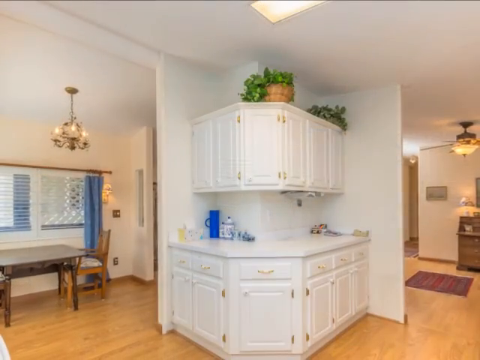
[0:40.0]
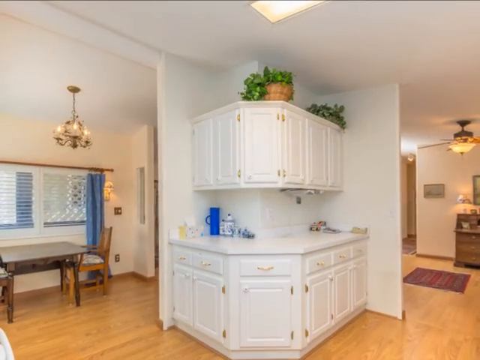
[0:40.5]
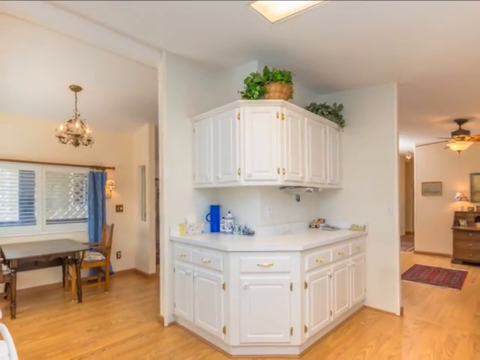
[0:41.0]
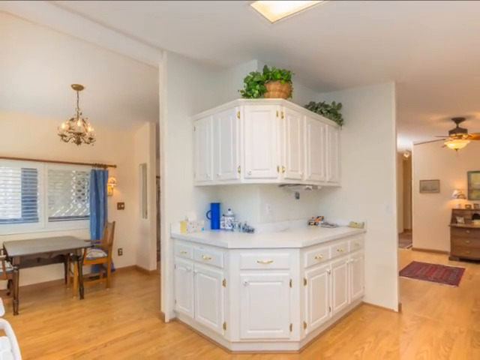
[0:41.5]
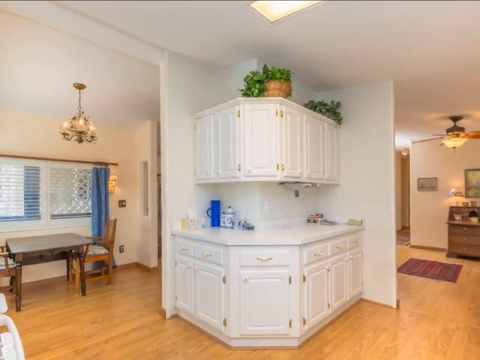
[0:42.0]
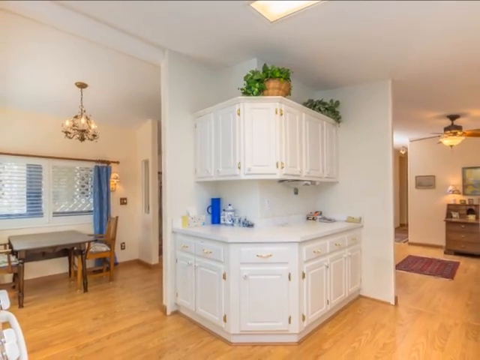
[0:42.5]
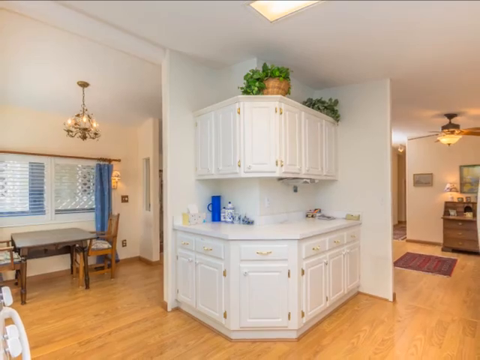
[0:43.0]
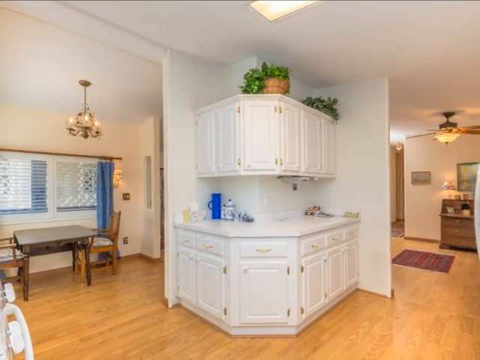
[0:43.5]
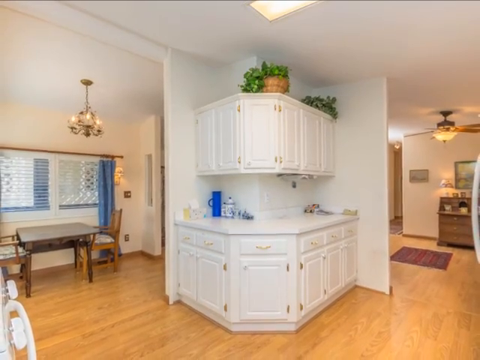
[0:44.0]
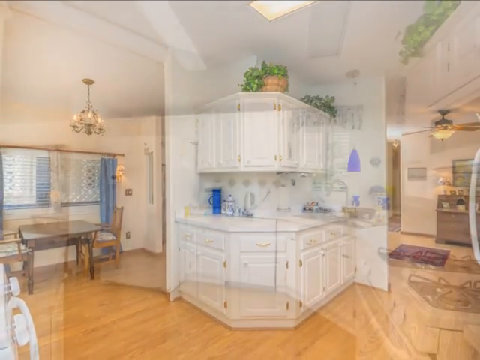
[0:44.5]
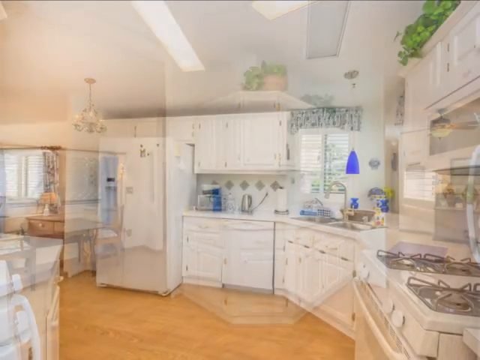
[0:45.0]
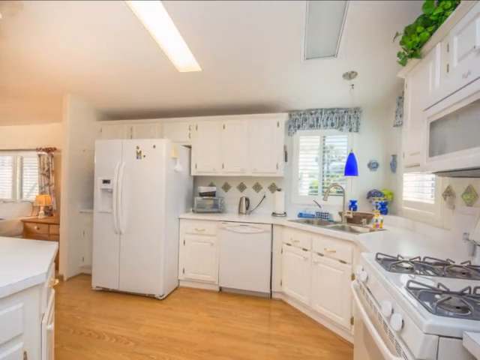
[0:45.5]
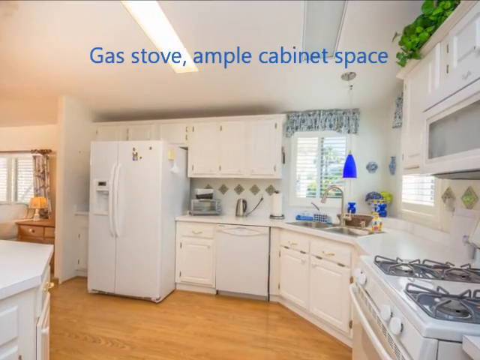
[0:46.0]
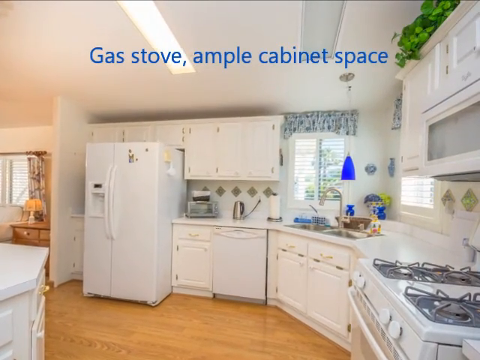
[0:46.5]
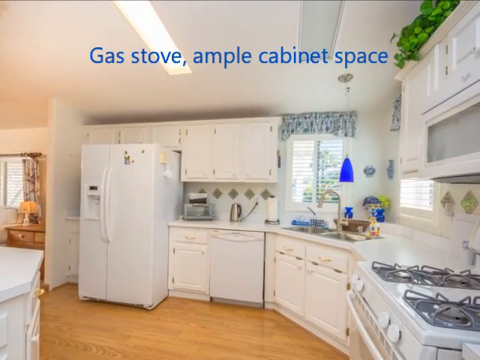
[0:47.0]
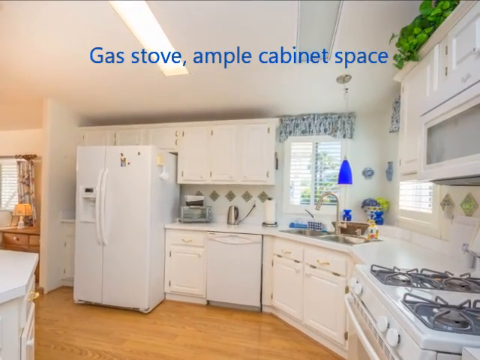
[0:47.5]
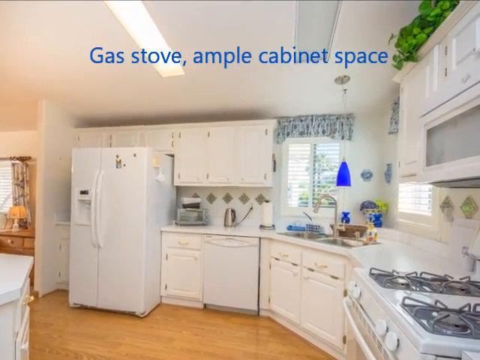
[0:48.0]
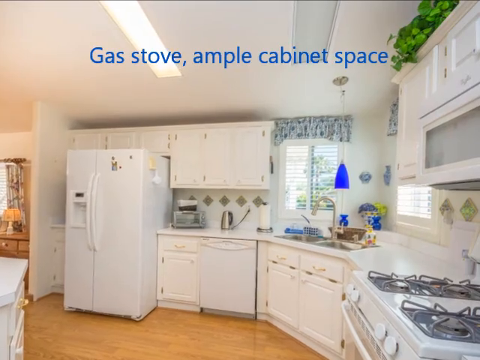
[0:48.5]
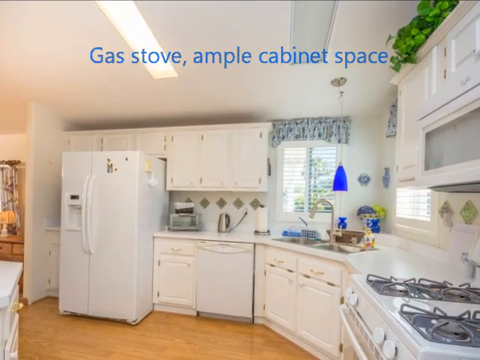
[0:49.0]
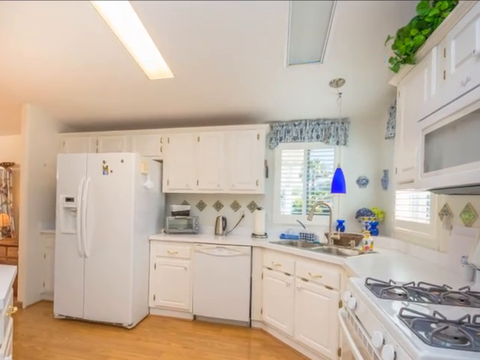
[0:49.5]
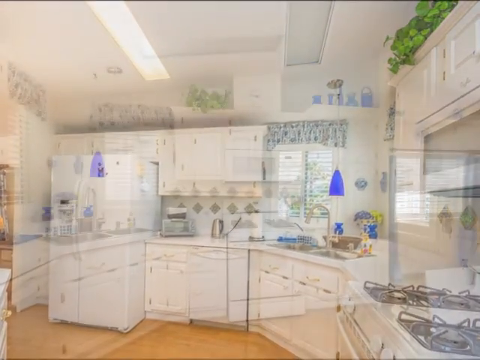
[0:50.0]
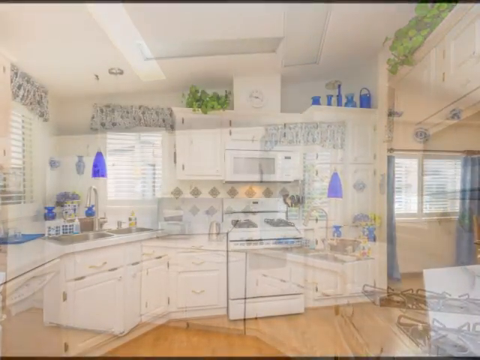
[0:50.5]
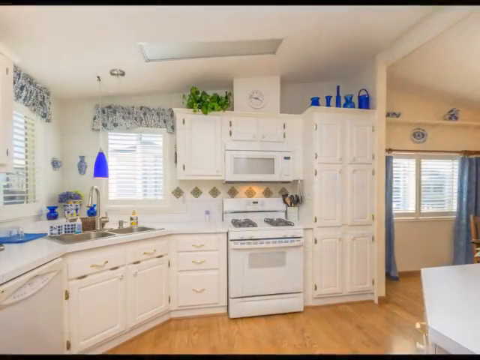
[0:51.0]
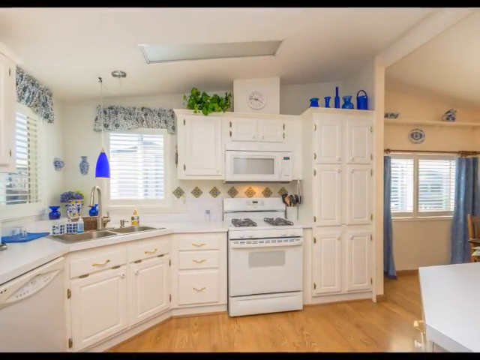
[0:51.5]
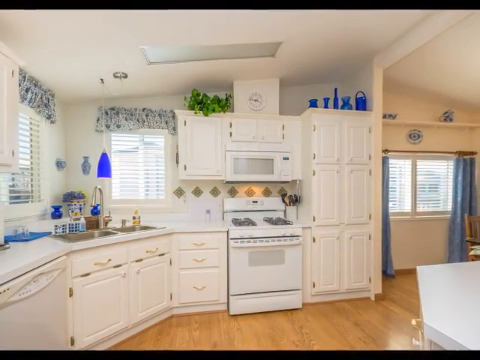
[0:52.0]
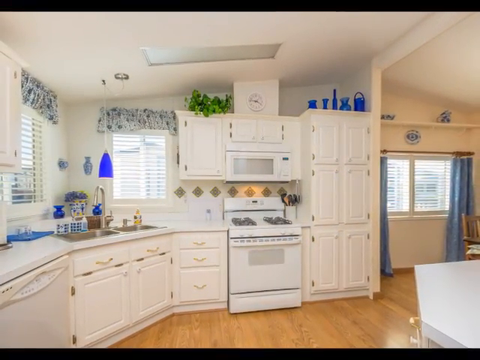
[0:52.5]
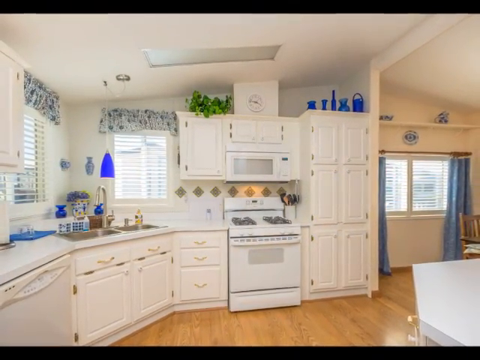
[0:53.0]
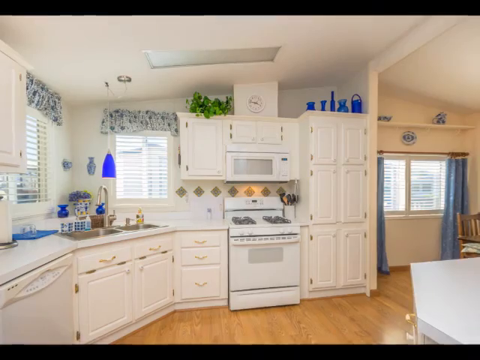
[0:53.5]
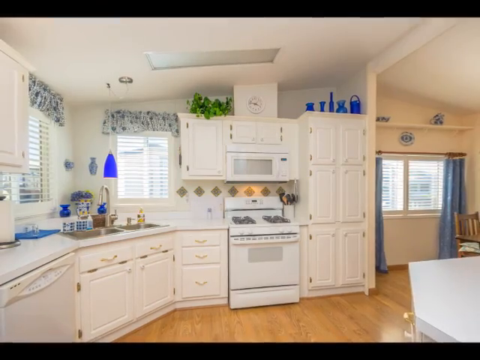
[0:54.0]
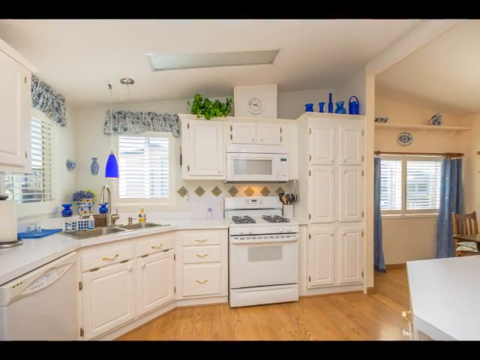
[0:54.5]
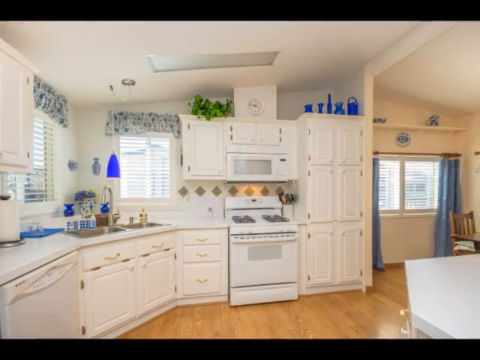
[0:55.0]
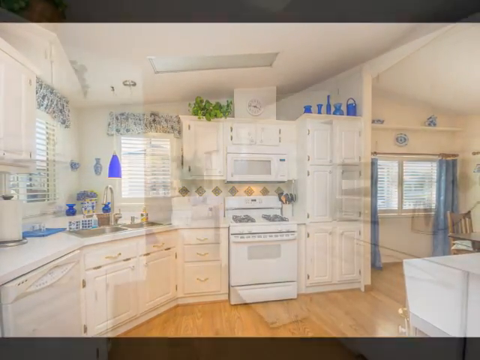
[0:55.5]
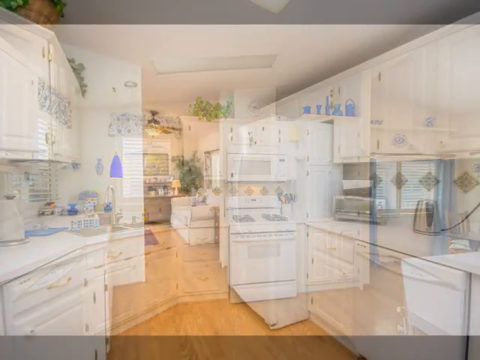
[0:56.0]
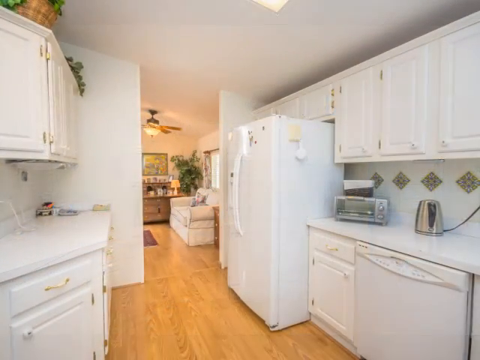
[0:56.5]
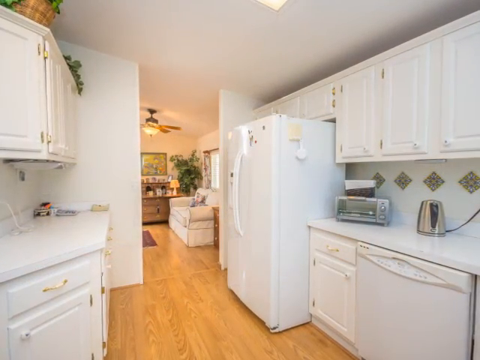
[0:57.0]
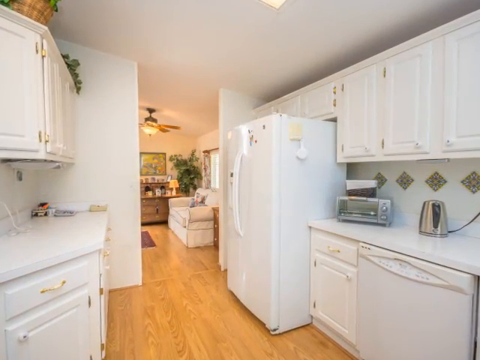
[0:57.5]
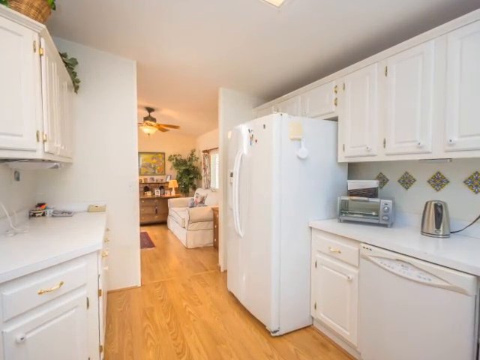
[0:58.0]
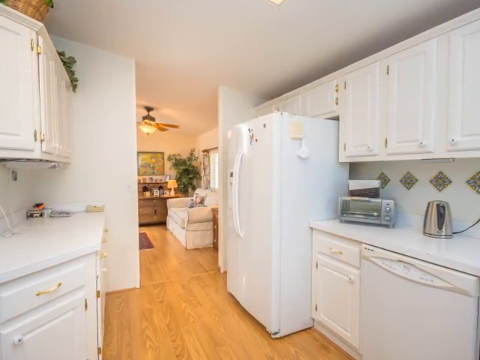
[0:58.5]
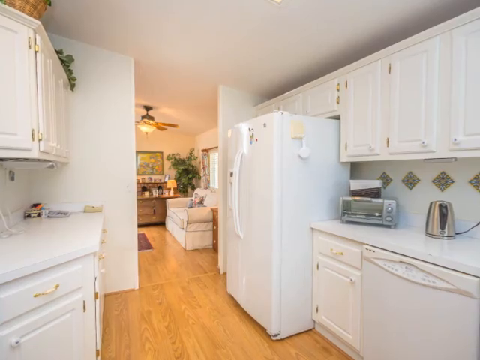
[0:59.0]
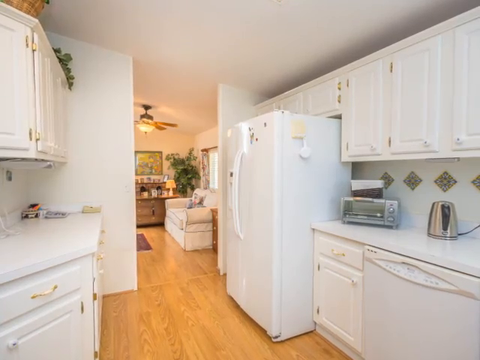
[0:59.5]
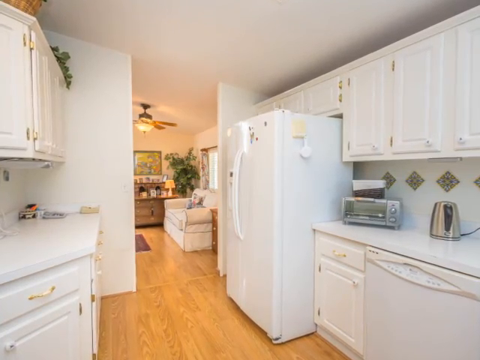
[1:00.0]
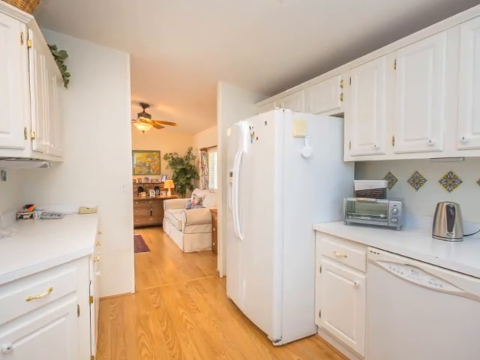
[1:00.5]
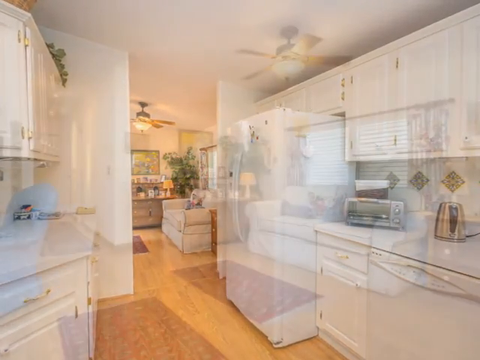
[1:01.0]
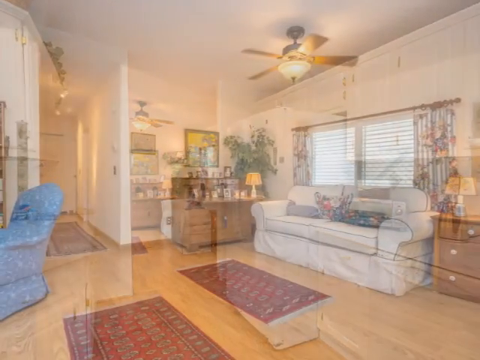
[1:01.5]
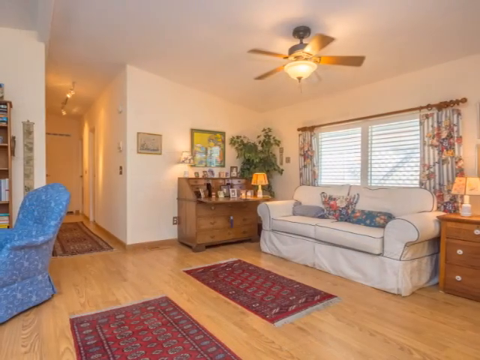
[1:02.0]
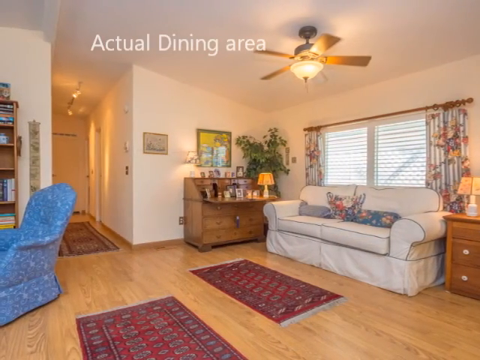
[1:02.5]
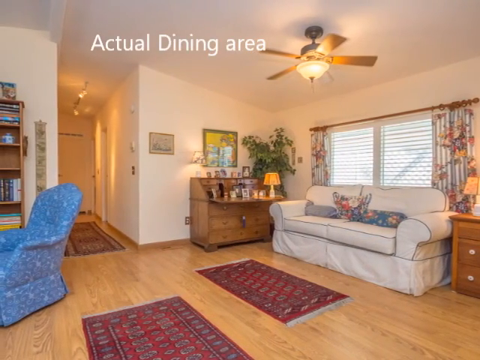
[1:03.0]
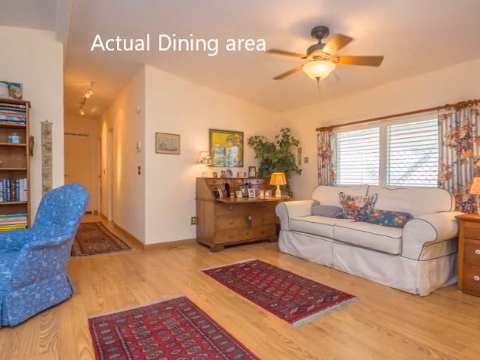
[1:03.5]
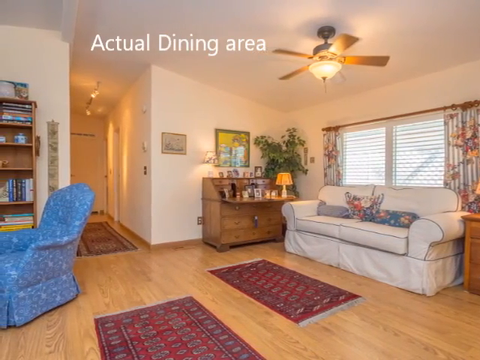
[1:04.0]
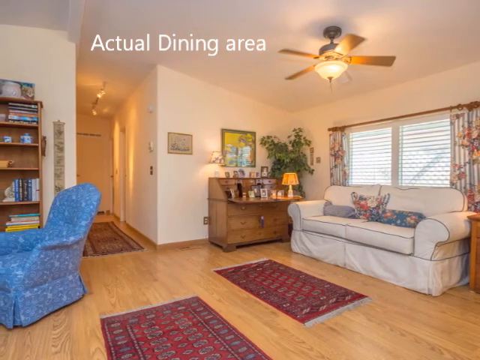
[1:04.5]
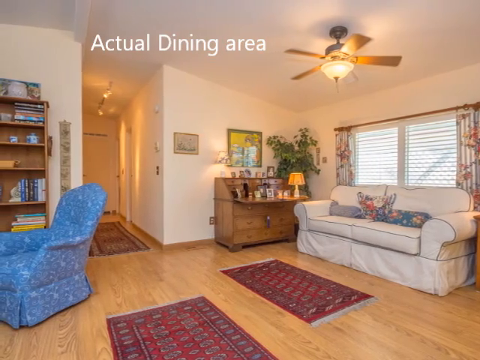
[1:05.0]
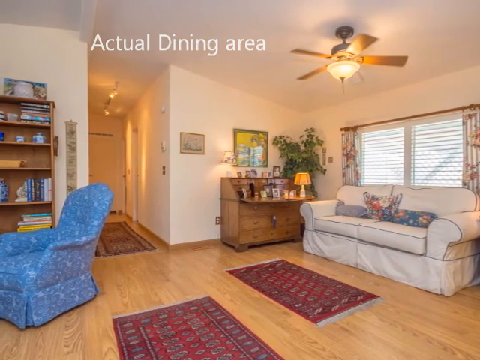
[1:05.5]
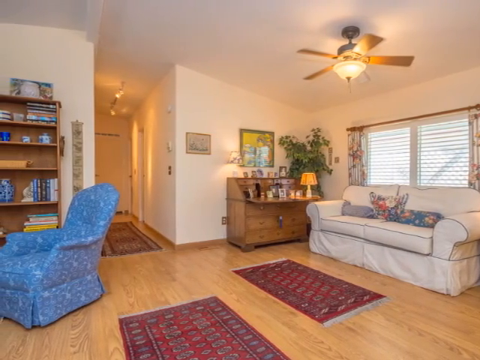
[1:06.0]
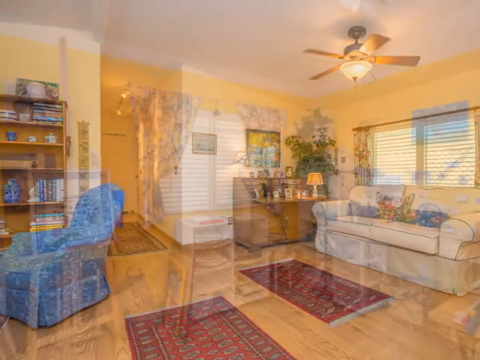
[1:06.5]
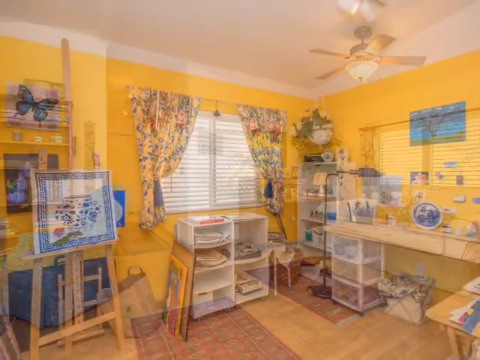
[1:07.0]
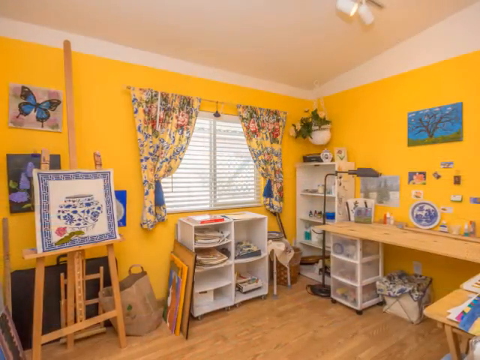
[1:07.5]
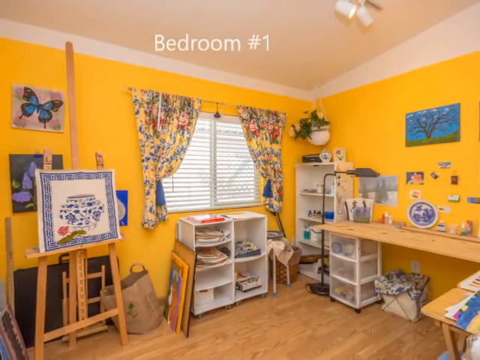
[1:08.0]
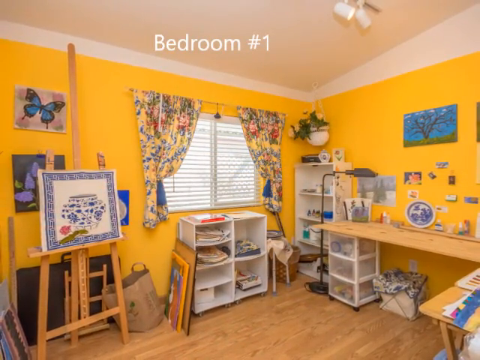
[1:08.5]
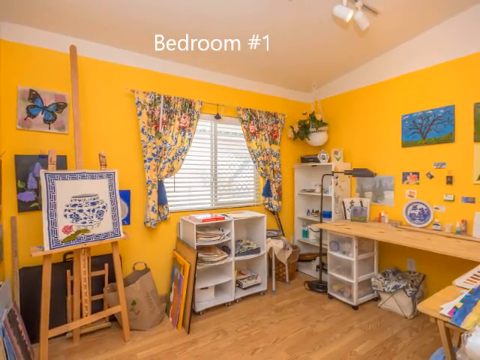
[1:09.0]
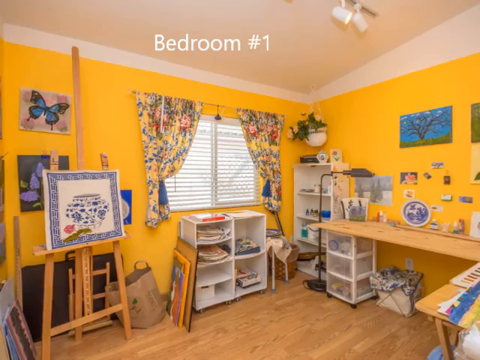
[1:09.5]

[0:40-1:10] The view continues in the kitchen, showing a corner with white cabinets and a small white countertop between the kitchen and the little dinette area. Looking around the kitchen, there is a gas stove and ample cabinet space. The cabinets are all white, and the backsplash appears to be white tile with a little colored tile in the center that goes around the edges. A sink in a corner has two windows, one on each side, and it looks like there are two sink holes, one at each side. There is a lot of cabinet space, and the flooring matches throughout the whole area. The refrigerator is white as well. The view moves from the kitchen to the living area, which has a dining area, and then to bedroom number one, which has the same flooring and a window off to the left side.